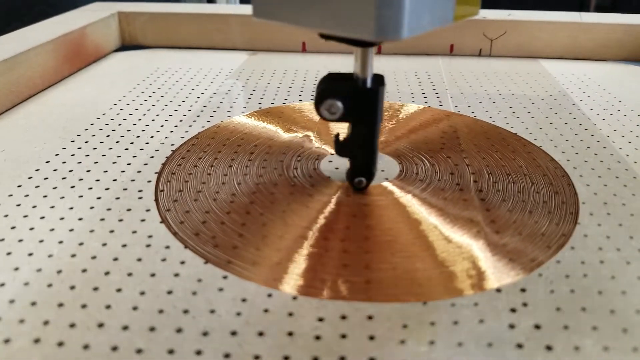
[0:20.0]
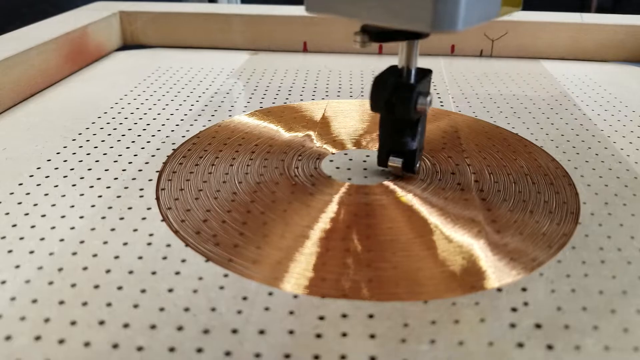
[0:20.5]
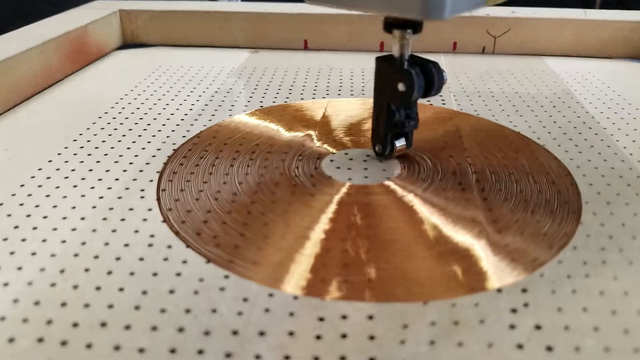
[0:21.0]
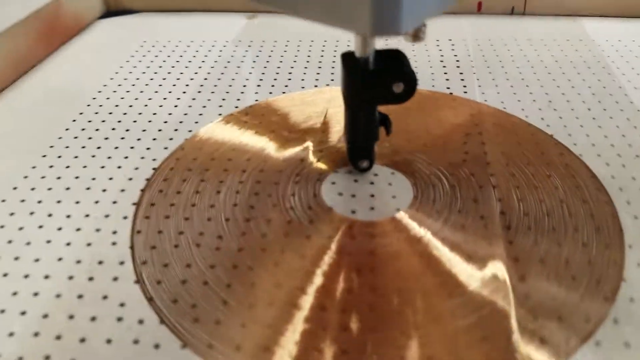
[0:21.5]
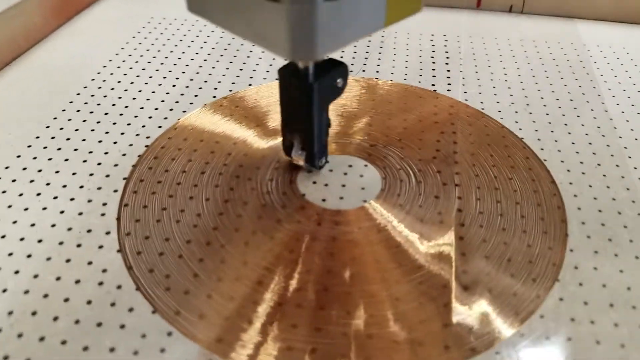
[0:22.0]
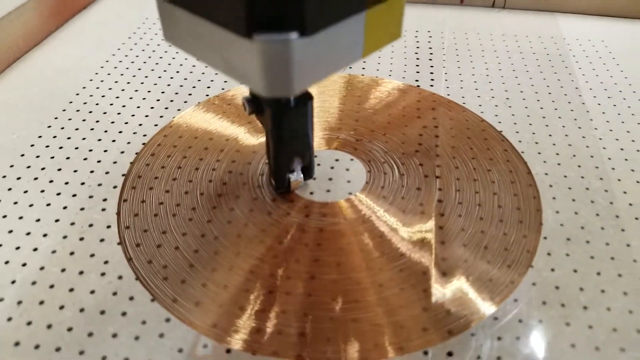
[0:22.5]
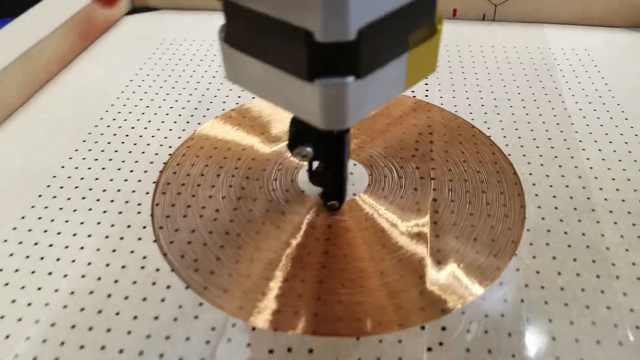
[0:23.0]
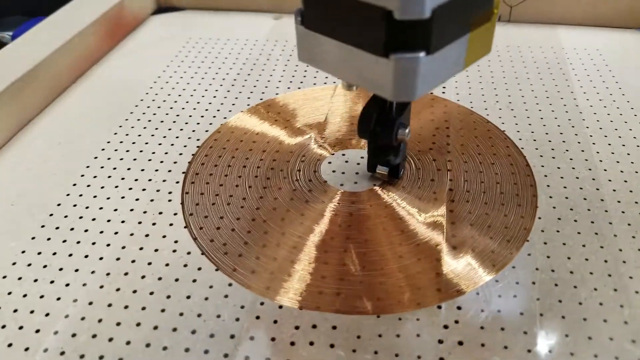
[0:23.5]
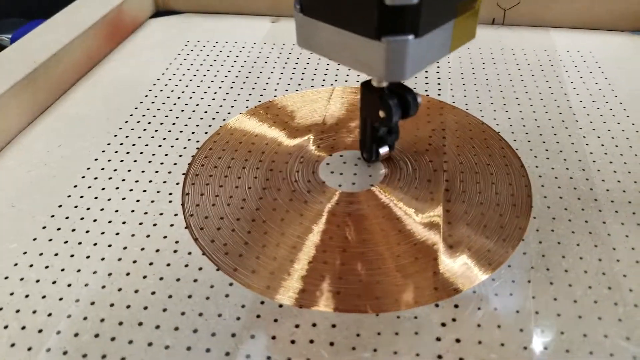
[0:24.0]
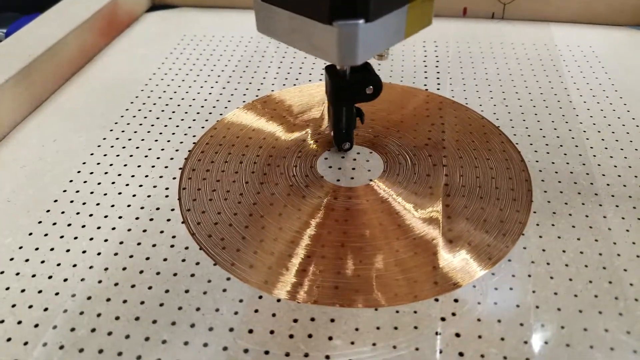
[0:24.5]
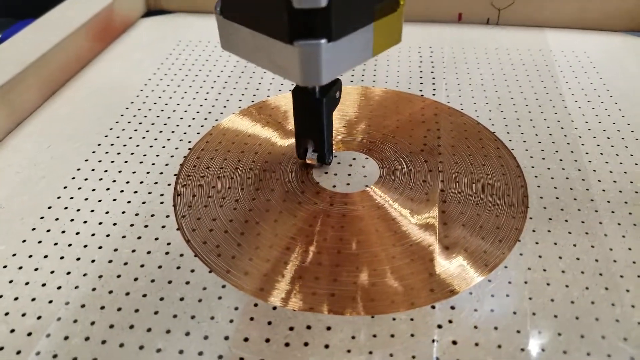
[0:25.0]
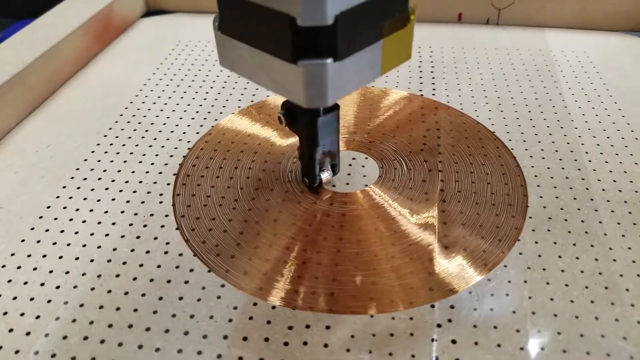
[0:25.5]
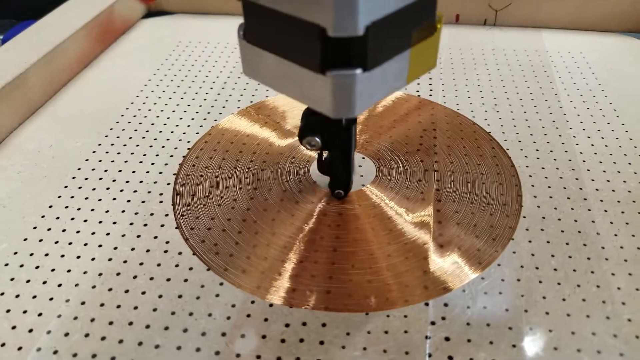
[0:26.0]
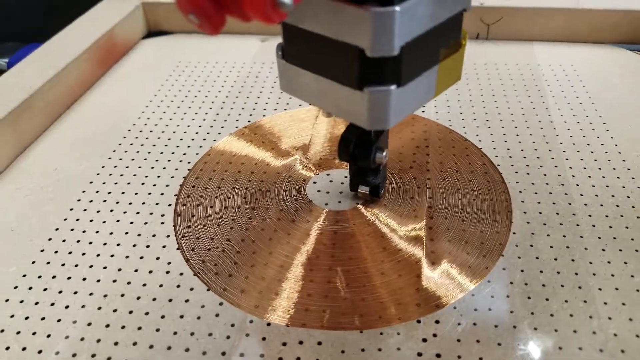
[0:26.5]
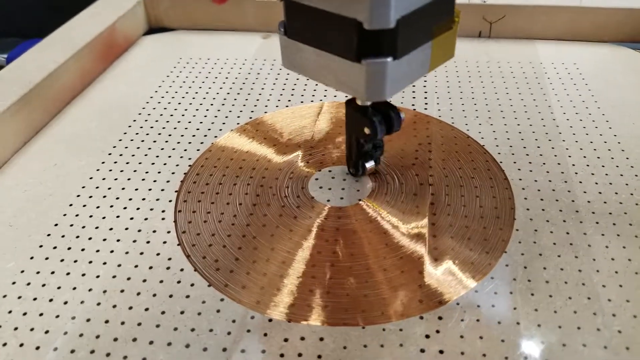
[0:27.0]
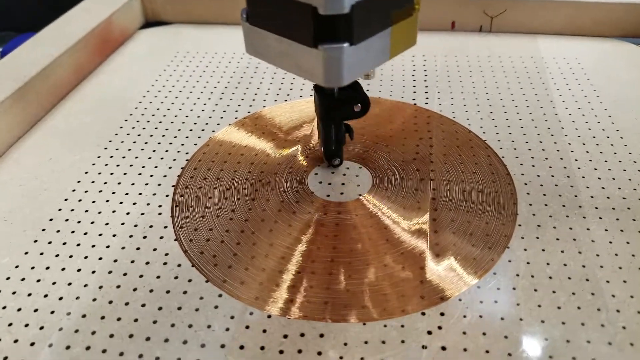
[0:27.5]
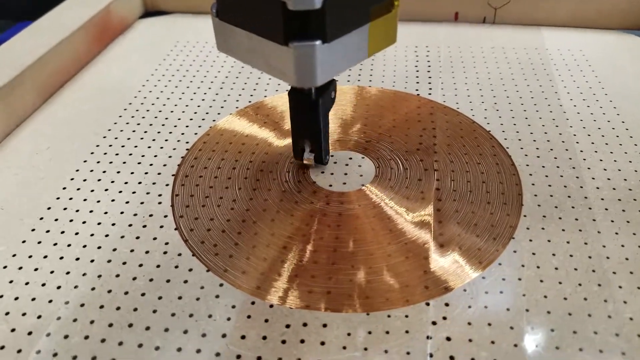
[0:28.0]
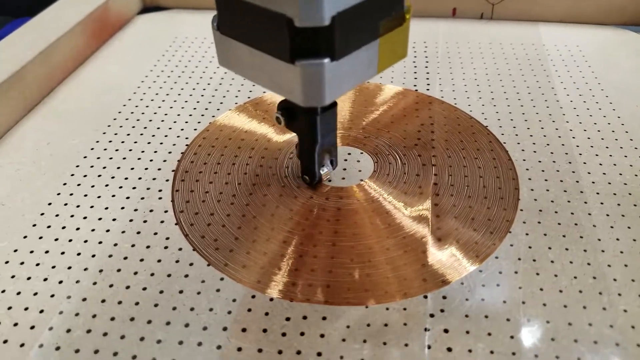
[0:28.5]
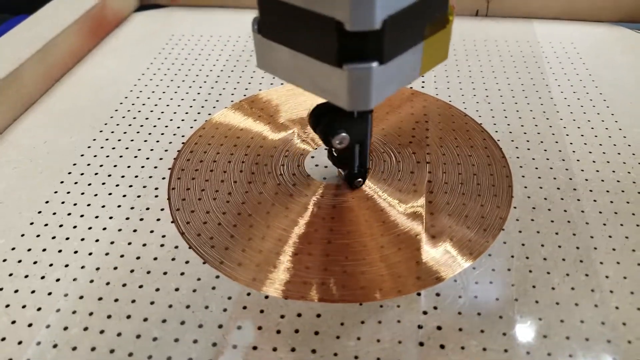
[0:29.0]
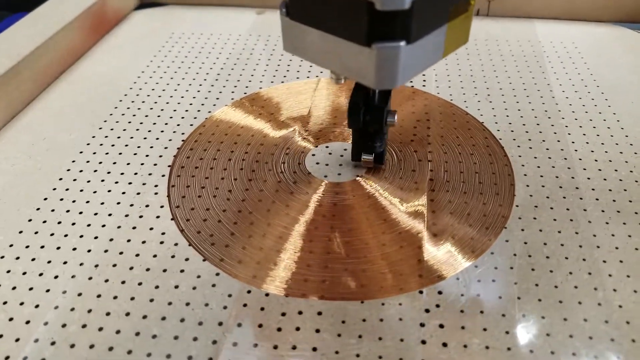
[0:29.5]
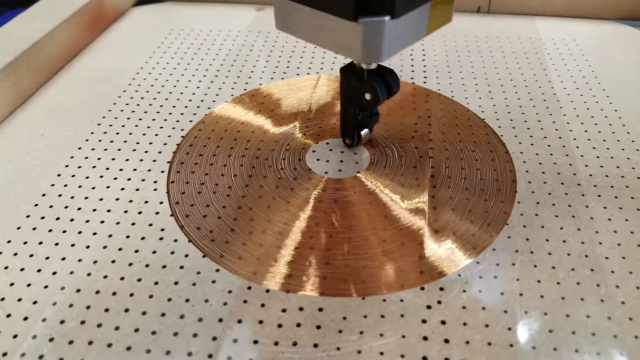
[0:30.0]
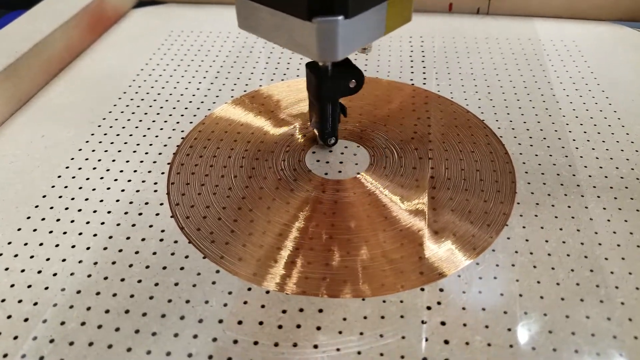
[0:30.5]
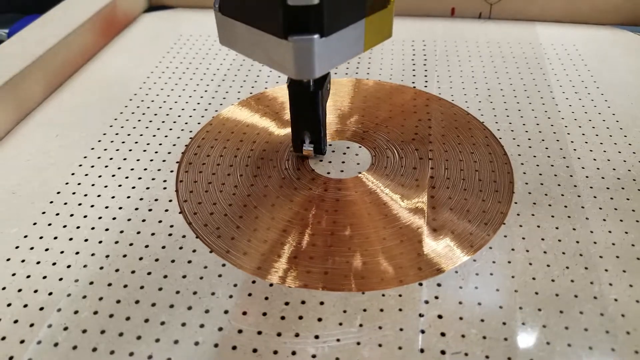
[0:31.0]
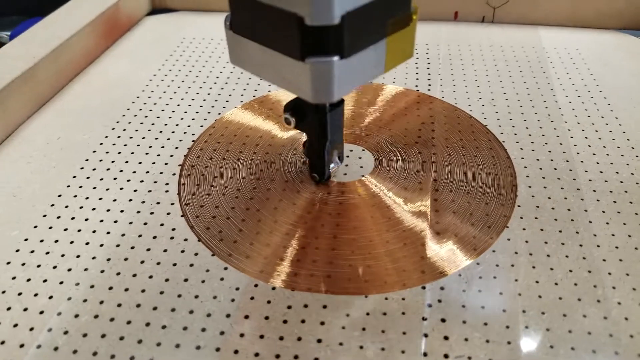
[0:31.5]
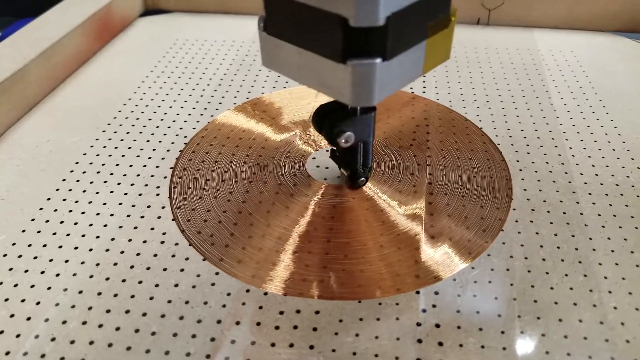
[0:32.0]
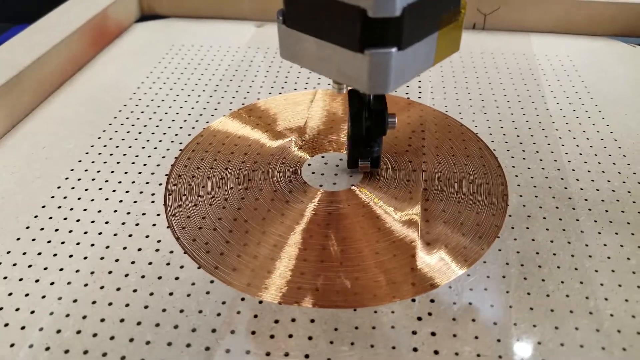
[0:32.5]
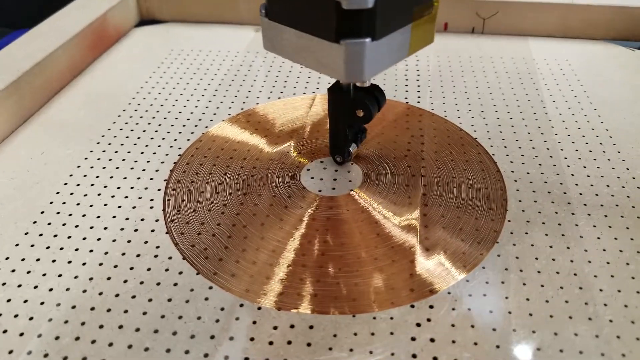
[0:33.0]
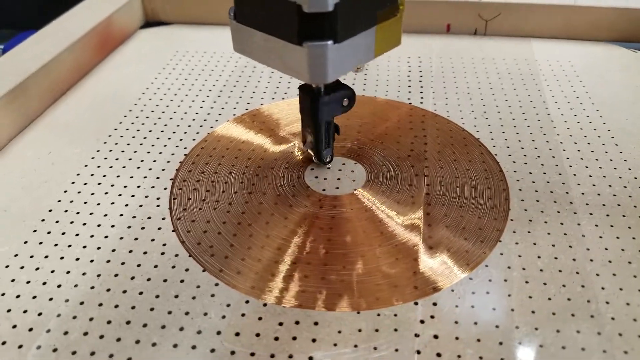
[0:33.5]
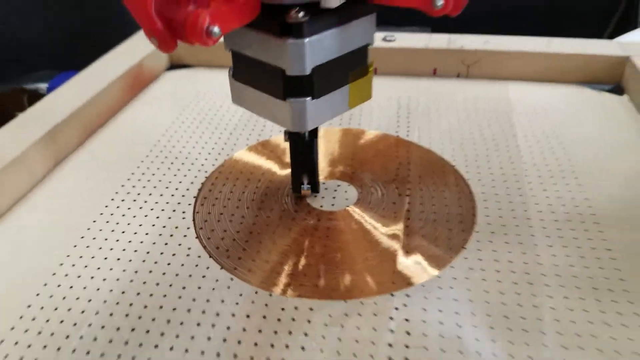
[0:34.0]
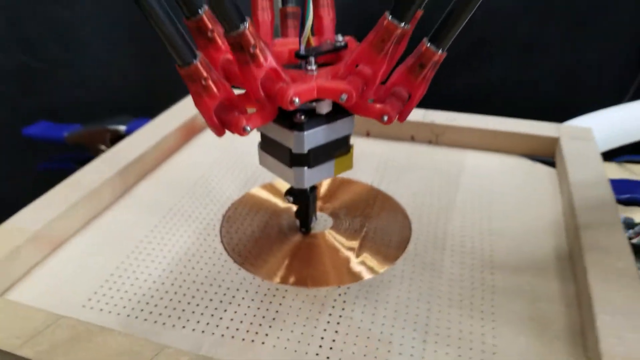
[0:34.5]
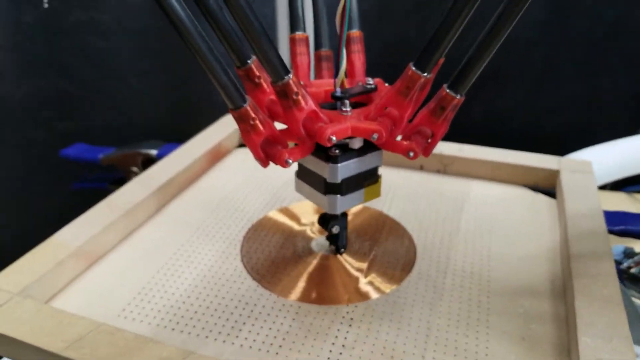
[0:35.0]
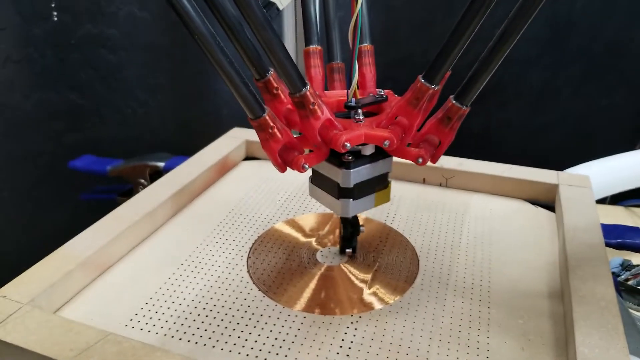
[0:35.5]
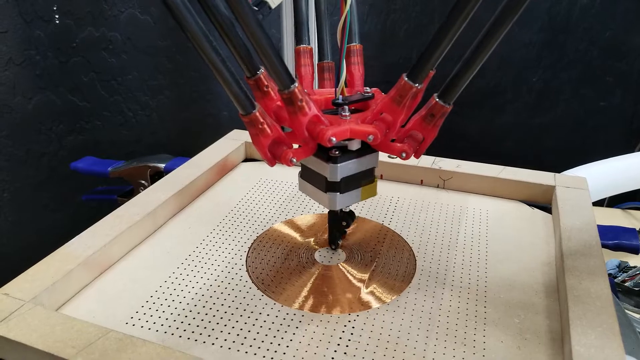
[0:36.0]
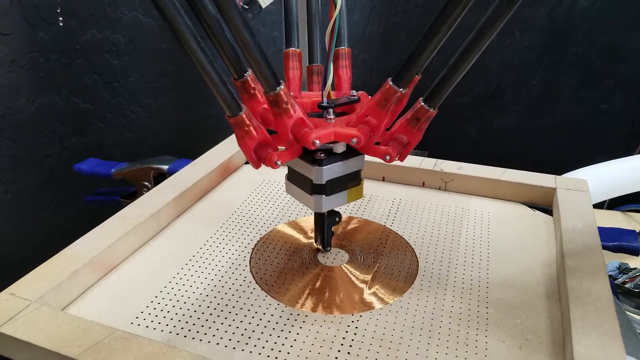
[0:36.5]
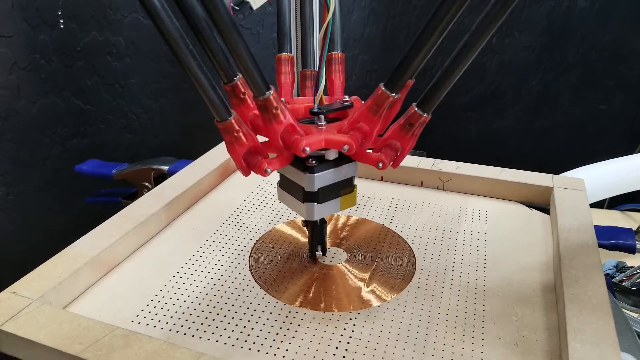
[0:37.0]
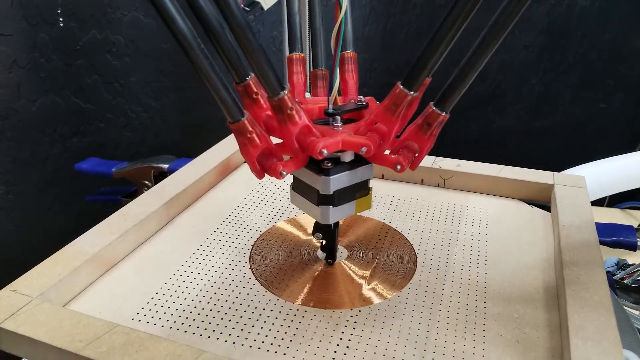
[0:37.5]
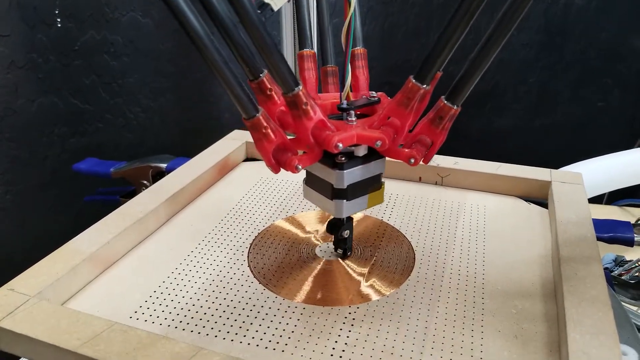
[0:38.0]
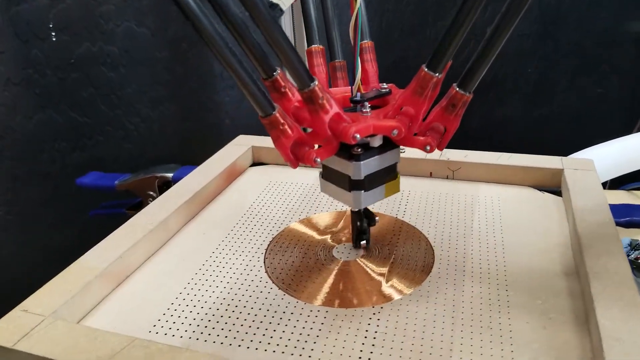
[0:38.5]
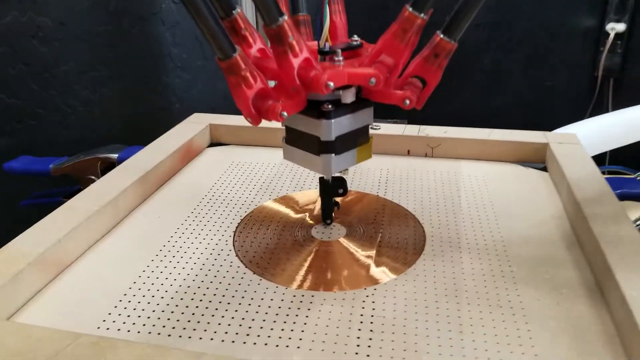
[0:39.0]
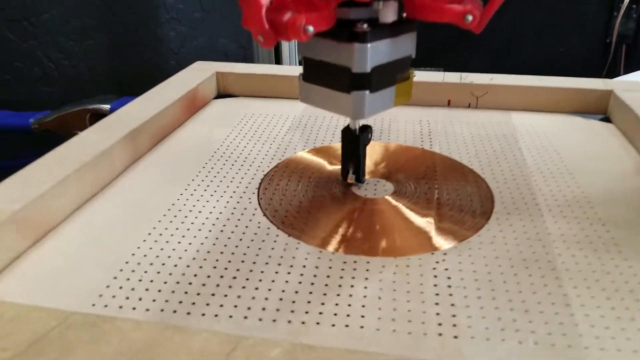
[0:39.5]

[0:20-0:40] The machine is shown from an aerial point of view; the camera briefly zooms out and then zooms back in while the motion stays consistent. The machine moves in a circular motion on the gold area of the wooden perforated table with holes in it. The footage is jerky: the person recording makes a jerking motion that shakes the camera and moves it in an untidy way. At the beginning, the top of the machine is not visible, only its tip, and the camera focuses on the movement on the gold area. Only the surface of the table can be seen, not the surrounding area such as the walls or the legs of the table. The shot ends on an aerial view in which more than just the surface of the table is visible.